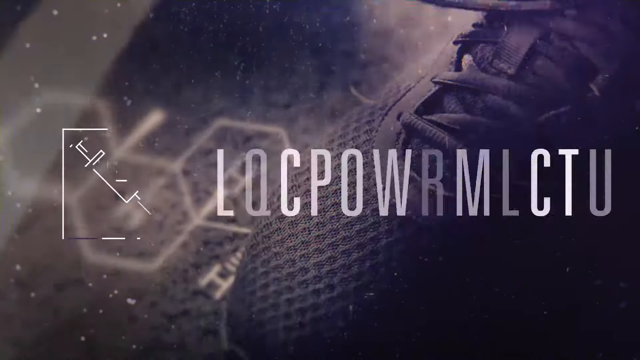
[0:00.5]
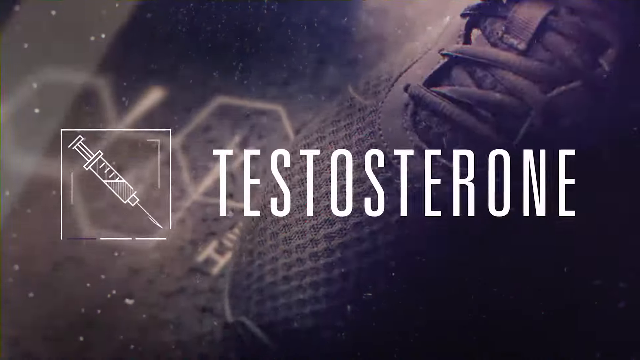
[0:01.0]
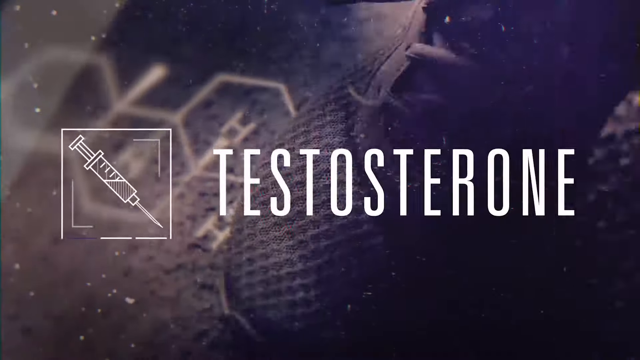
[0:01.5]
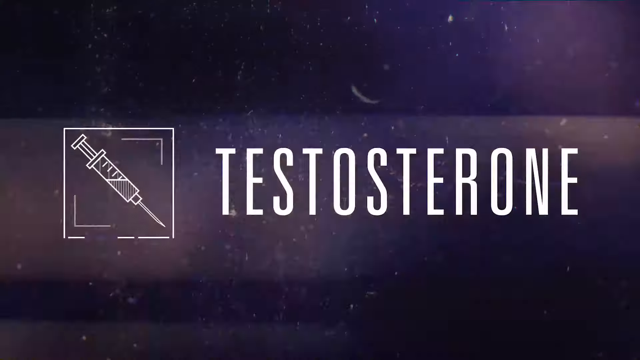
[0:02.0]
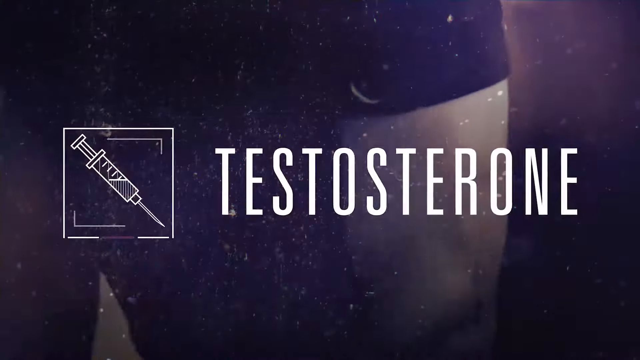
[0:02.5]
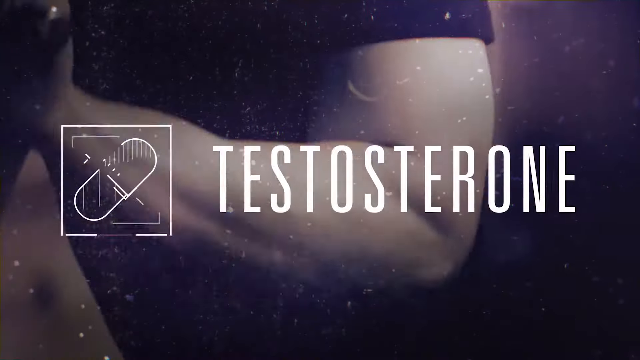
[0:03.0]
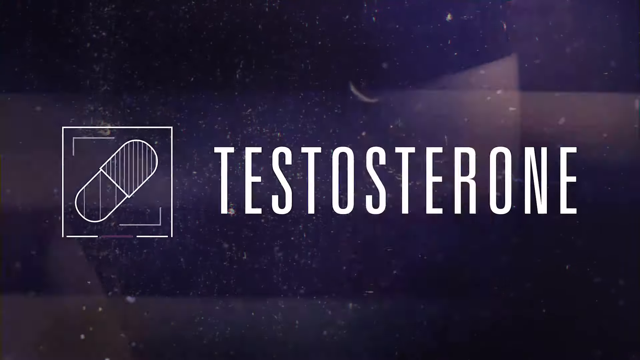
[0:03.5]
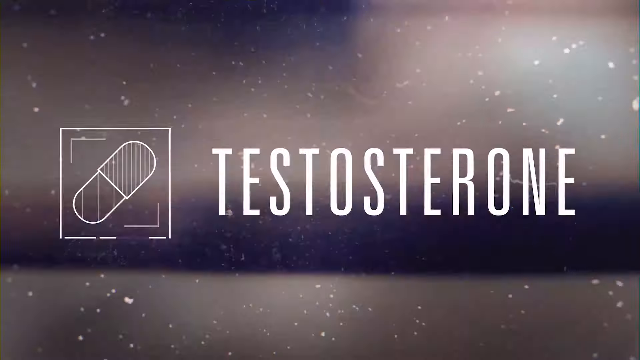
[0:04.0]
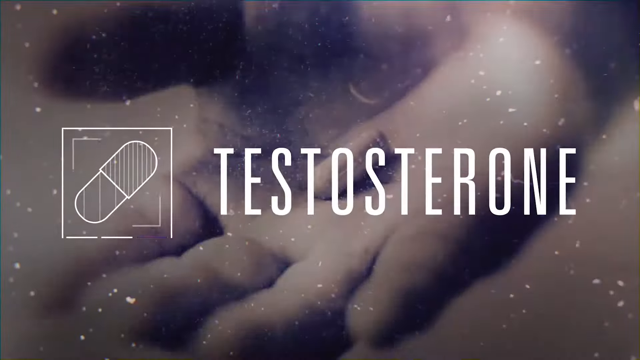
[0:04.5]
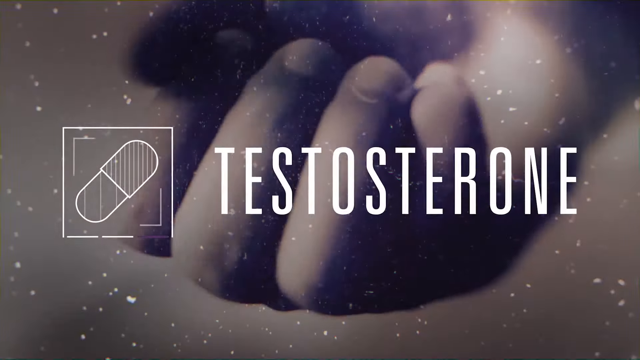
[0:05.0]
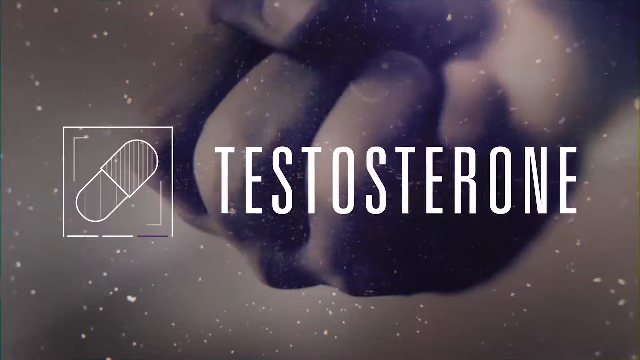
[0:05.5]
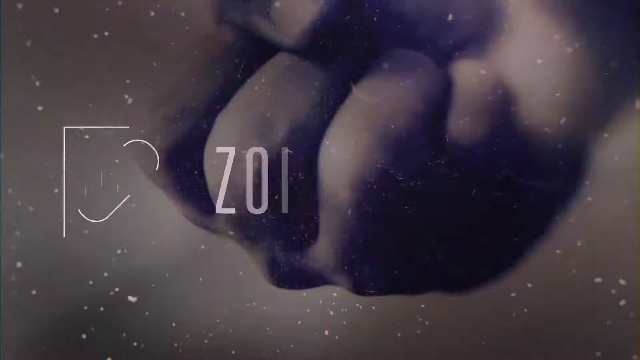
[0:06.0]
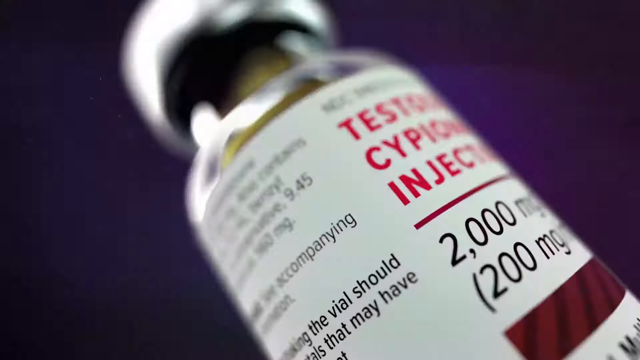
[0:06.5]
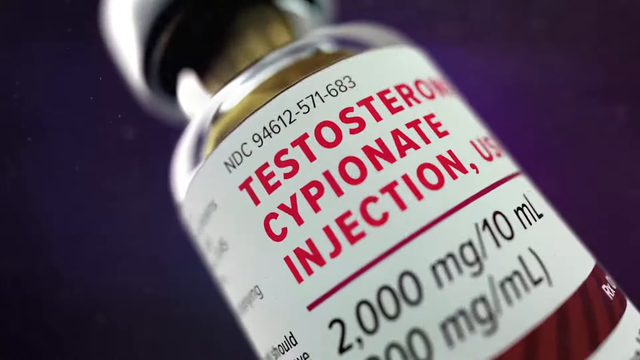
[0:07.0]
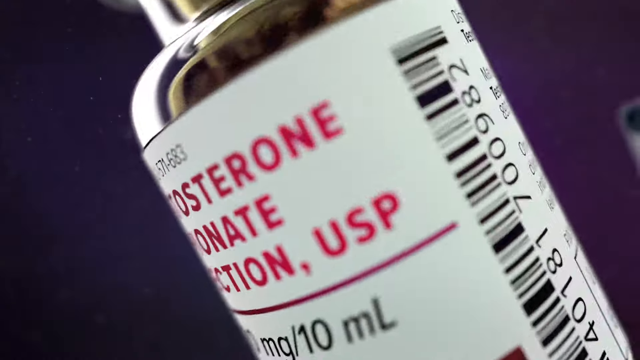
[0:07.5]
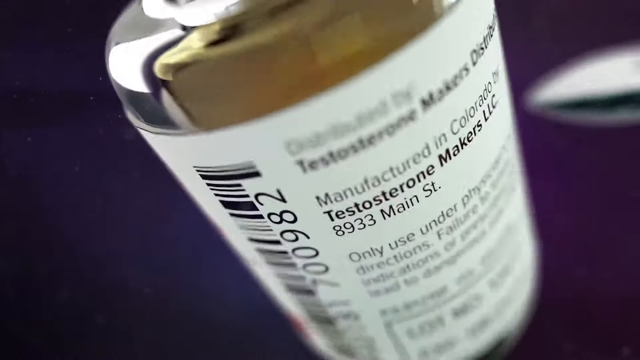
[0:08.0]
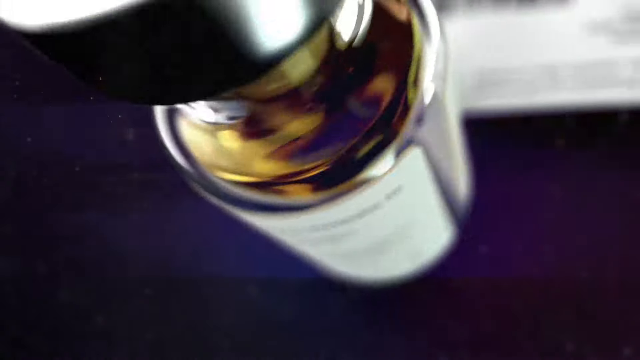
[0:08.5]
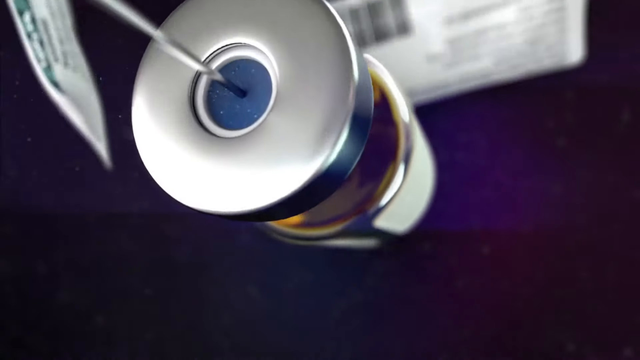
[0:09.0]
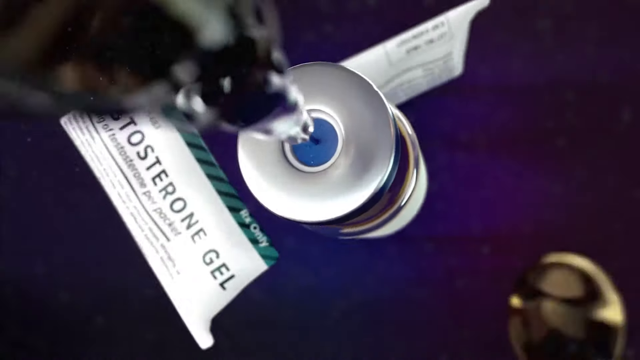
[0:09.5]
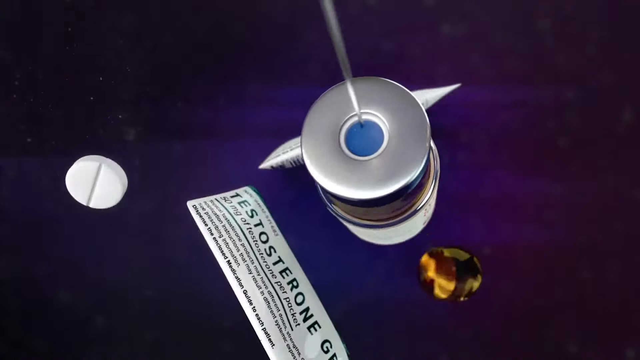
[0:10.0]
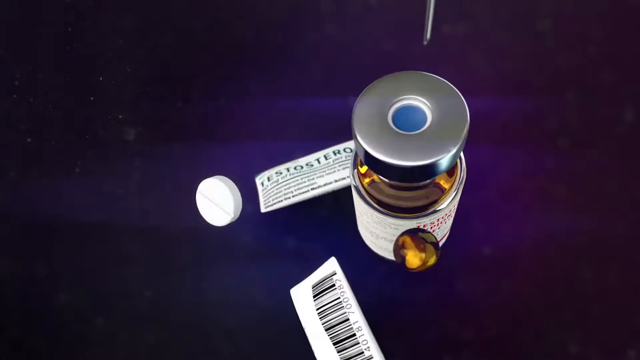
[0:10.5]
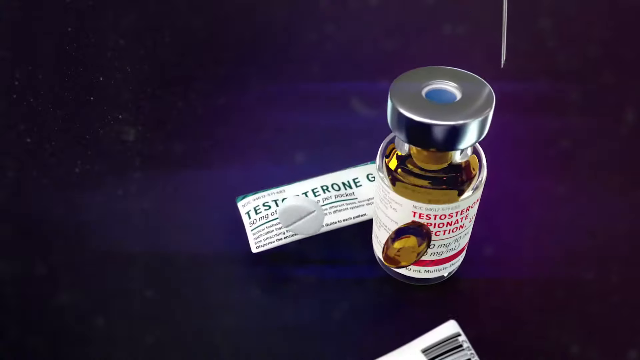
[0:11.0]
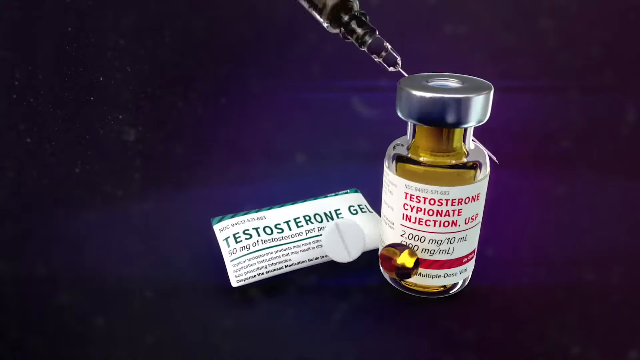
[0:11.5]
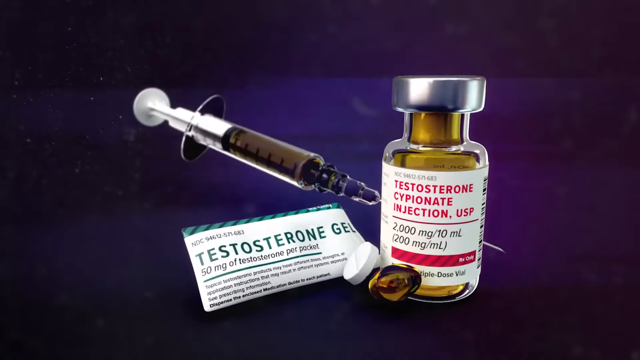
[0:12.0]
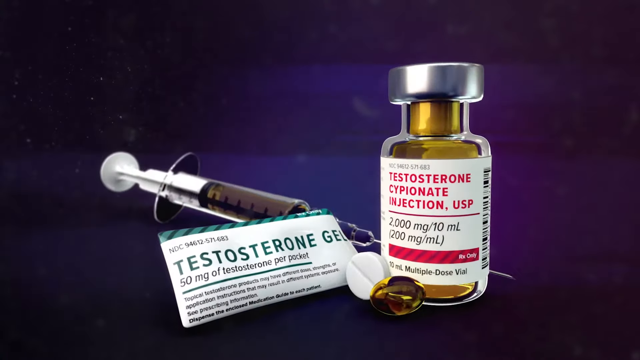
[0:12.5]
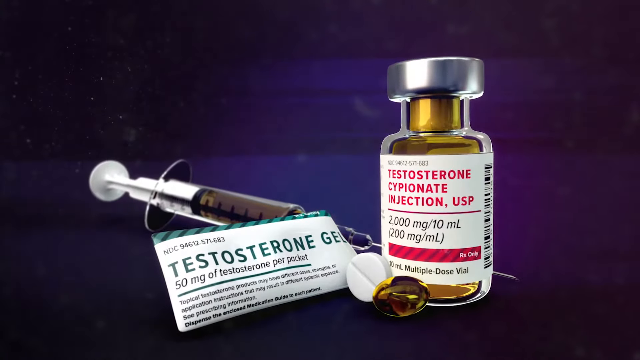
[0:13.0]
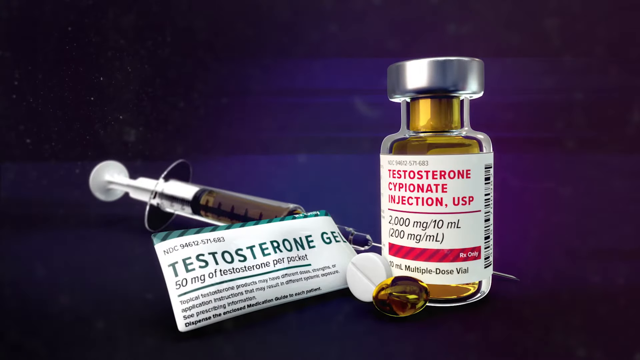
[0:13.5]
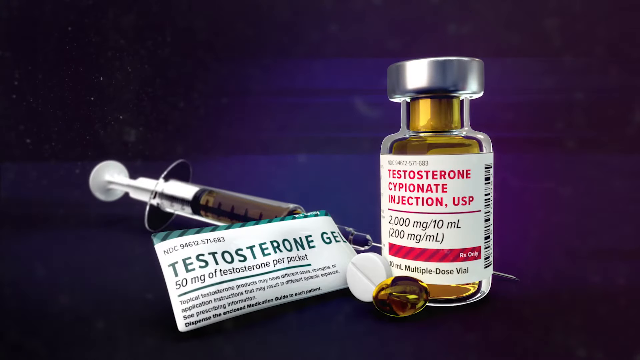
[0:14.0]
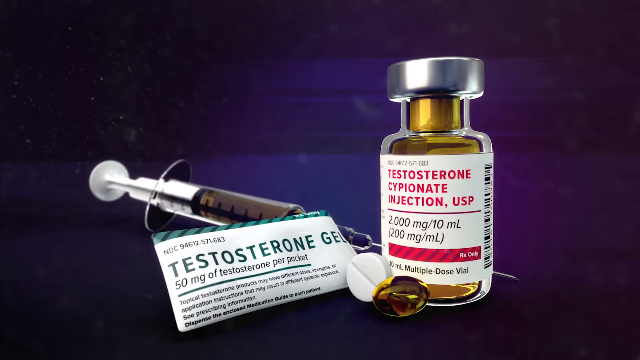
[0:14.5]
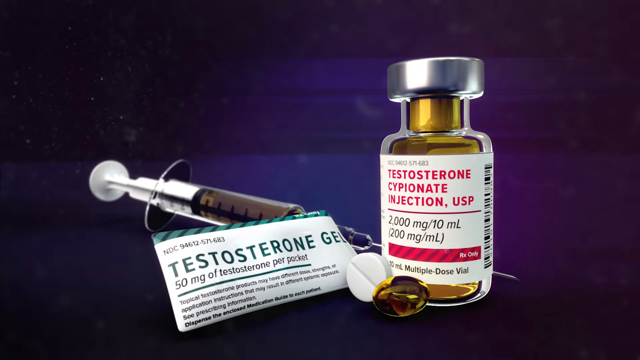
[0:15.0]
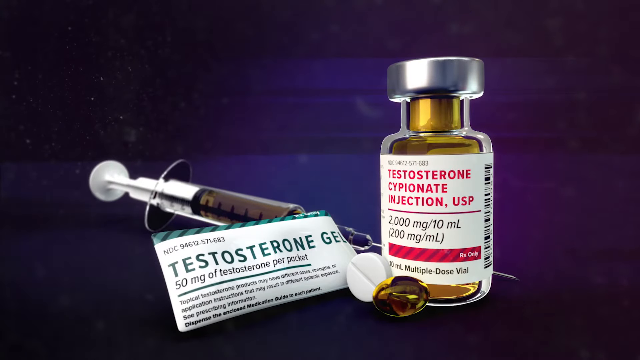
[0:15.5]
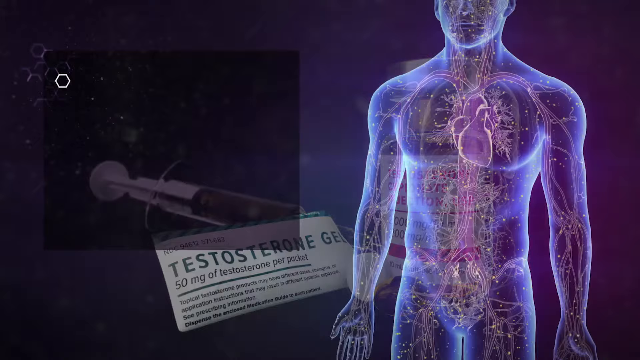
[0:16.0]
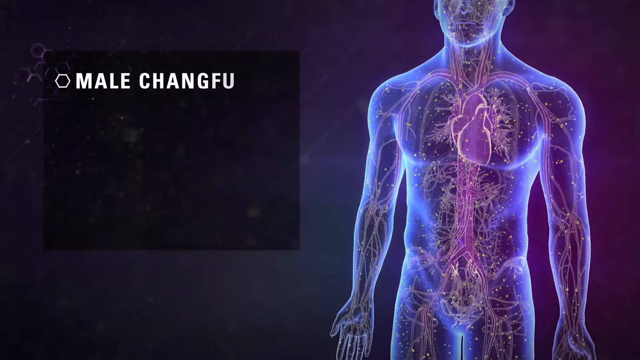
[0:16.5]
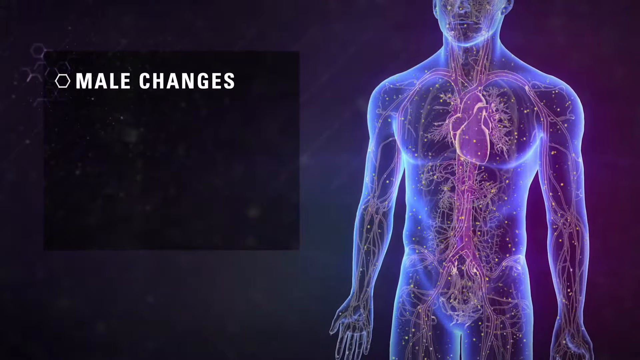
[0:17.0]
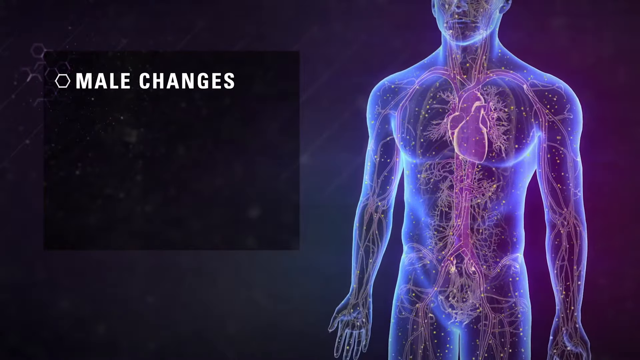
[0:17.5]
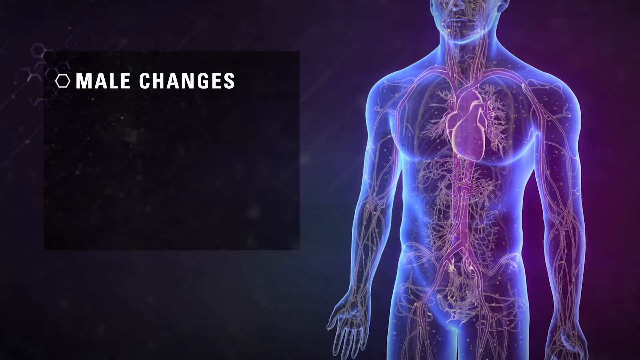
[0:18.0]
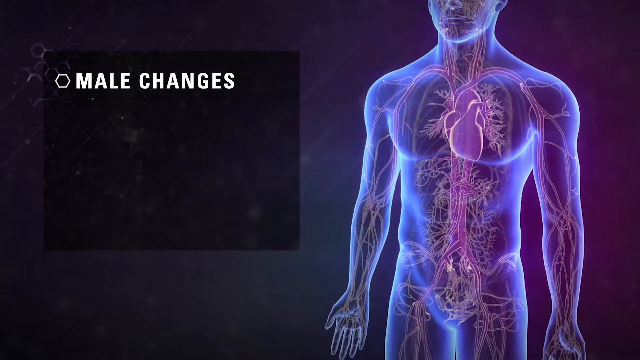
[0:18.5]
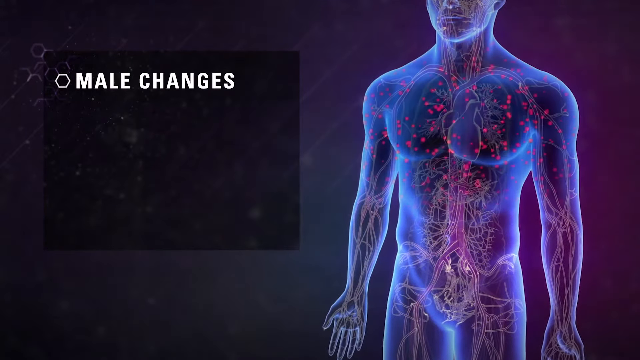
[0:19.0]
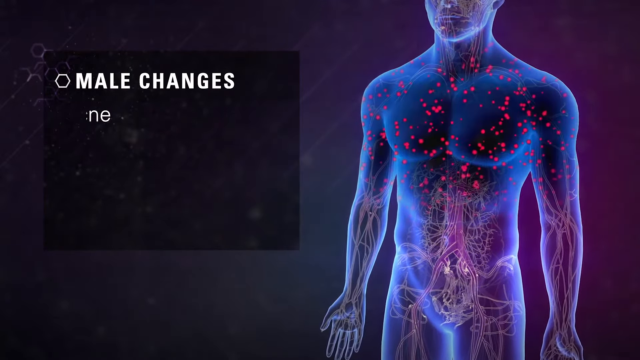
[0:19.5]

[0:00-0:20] The video opens on a grayish background where a man is lifting weights, with "testosterone" in large white letters. The dark background turns into a rotating bottle of testosterone: a small brown glass vial with a silver metal top and a label that reads in red "testosterone cipionate injection USP" and then "2000 milligrams per 10 milliliters." There is also a needle with some of the medication in it, and a small label that says "testosterone gel" is lying beside it on the gray background. The items move around until they are all sitting on a gray table. Next, a male figure appears with the digestive system outlined inside it, and on the left "male changes" is written in white print on a black background, with a small box beside it.